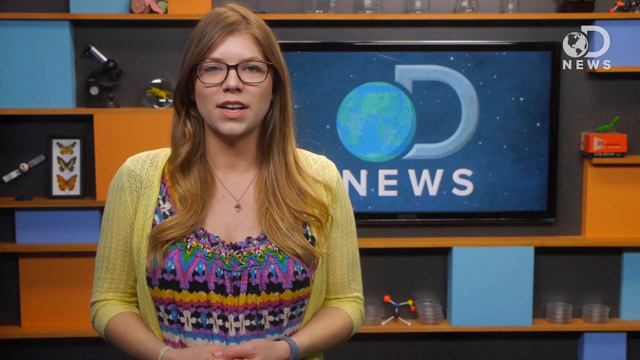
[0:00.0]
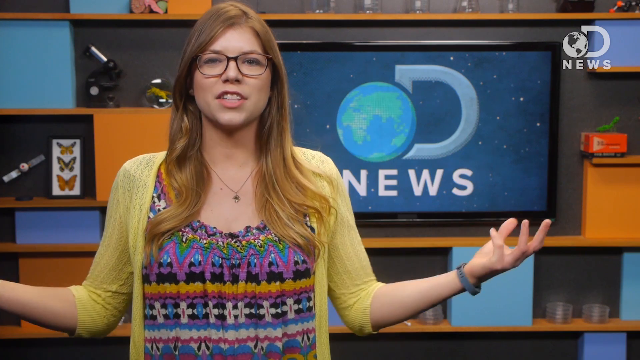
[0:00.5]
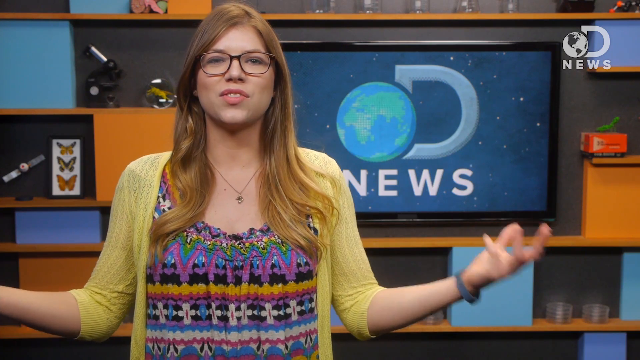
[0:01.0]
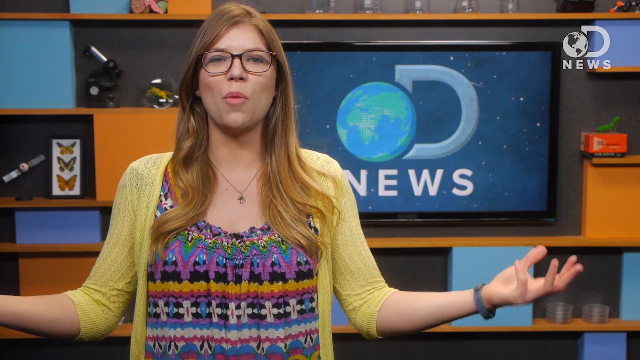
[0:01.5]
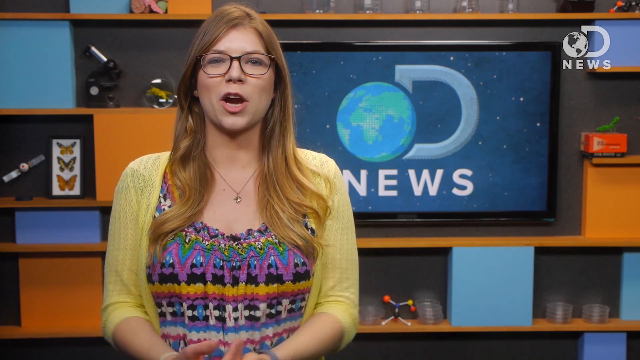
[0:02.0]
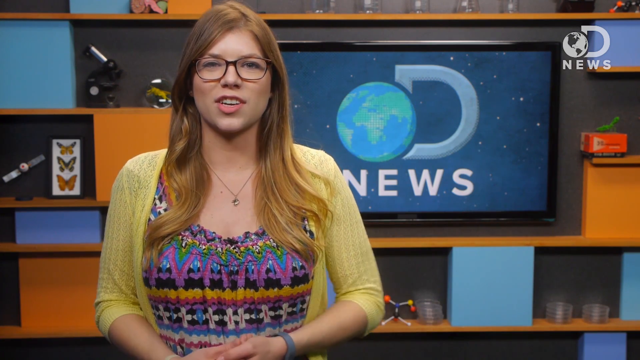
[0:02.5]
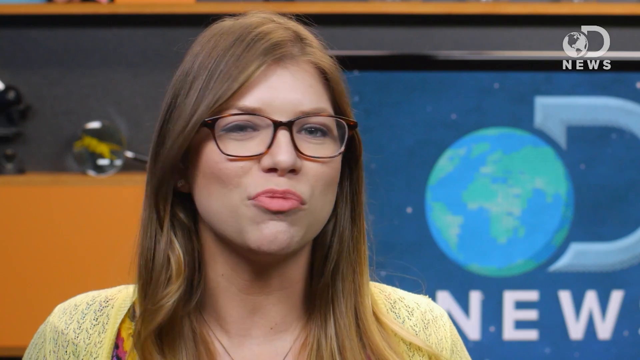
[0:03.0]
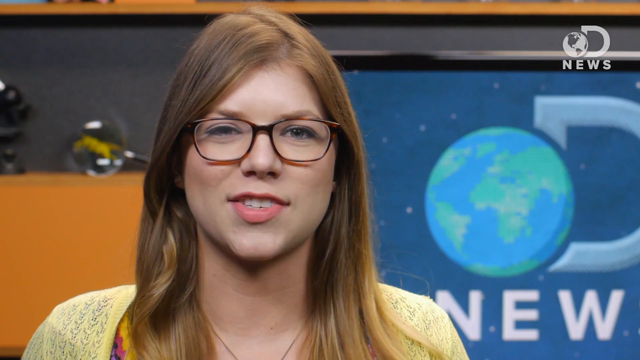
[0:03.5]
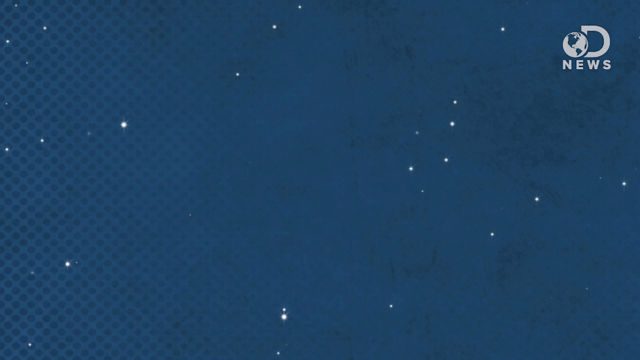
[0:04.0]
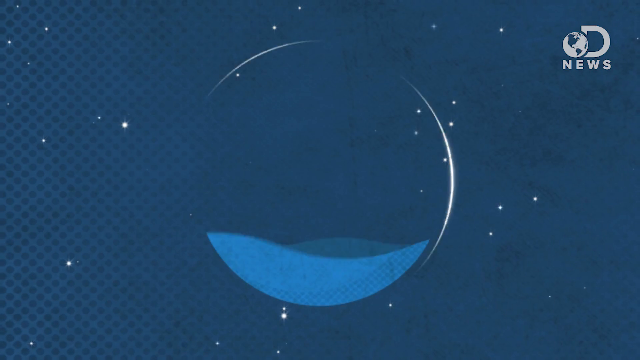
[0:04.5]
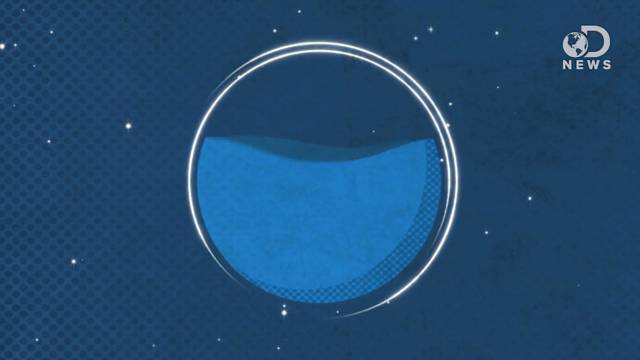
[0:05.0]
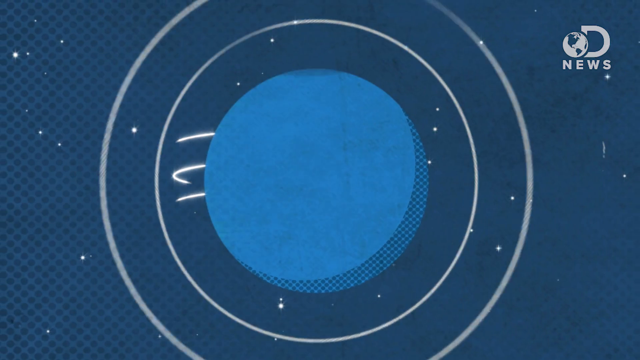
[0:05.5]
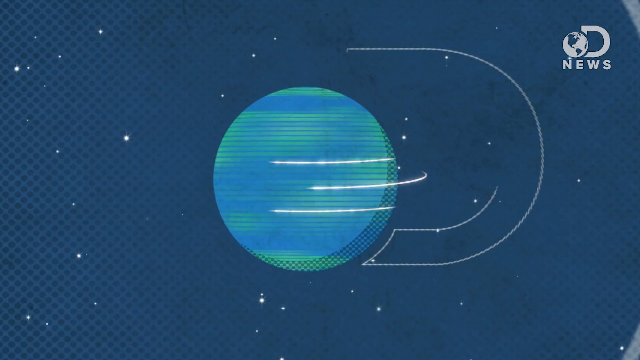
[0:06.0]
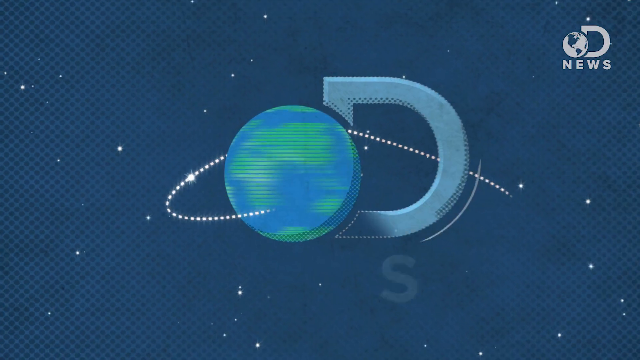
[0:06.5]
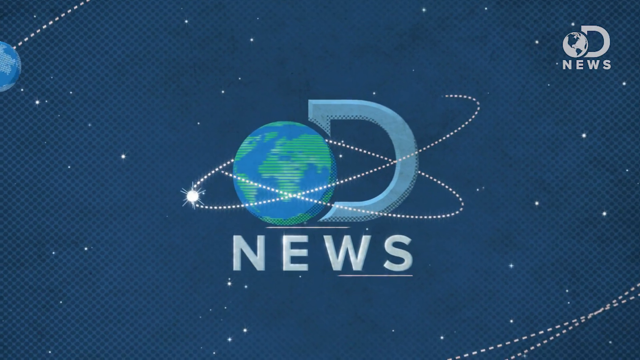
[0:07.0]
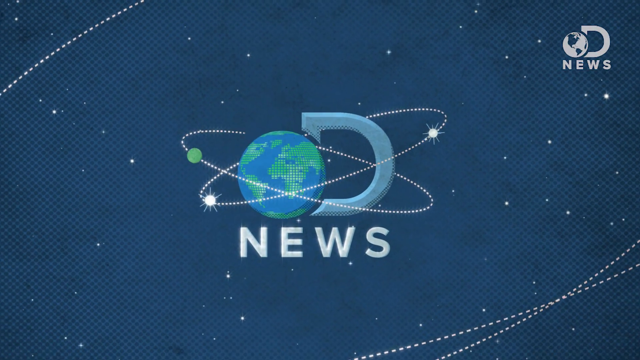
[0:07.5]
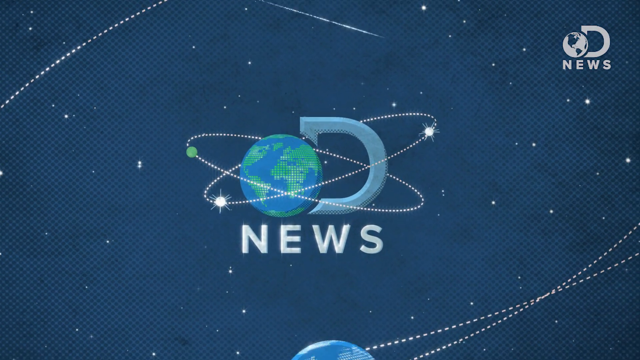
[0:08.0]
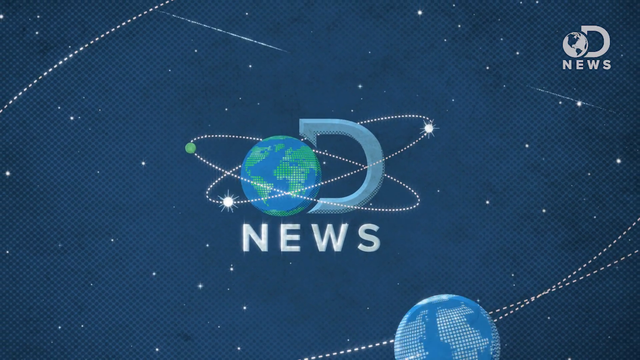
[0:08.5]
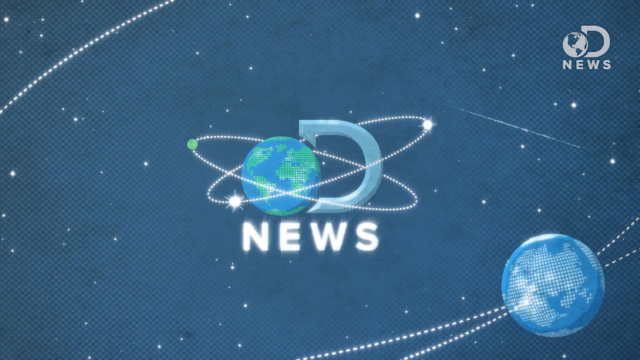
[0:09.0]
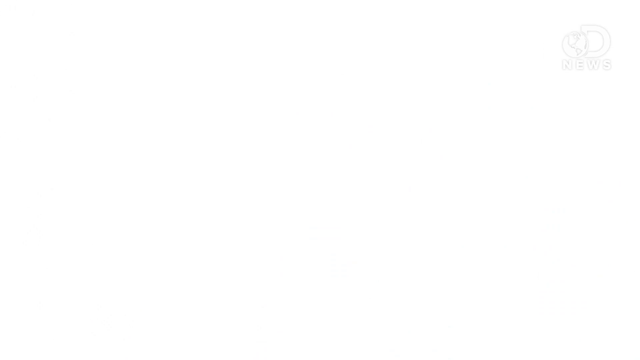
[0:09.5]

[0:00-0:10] A woman stands in front of a TV screen, filmed from approximately the upper waist up. She wears a yellow cardigan and a very colorful shirt, and she has long blonde hair that reaches her mid chest. In the background are a series of shelves decorated in black, orange, and blue, and against the black backgrounds are various objects such as butterflies, a microscope, and a small molecule diagram. The TV screen in the center behind her shows a globe with the letter D extending from it, and under that it says "news." The same logo is replicated as a watermark in the upper right-hand corner of the screen. The woman speaks into the camera. As she does, she lifts her forearms to about a 90-degree angle and throws them open wide, fingers slightly curled upward and palms facing up. She shakes her hands slightly out there while she speaks, then folds them back in front of her. She leans forward slightly, and the camera cuts to a shoulder-up view of her continuing to speak into the camera. The Discovery News logo then appears, followed by a brief fade to a white screen.